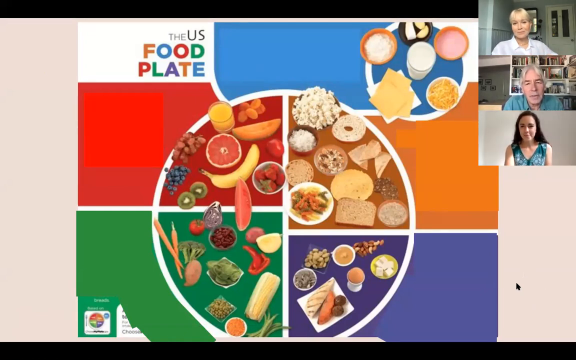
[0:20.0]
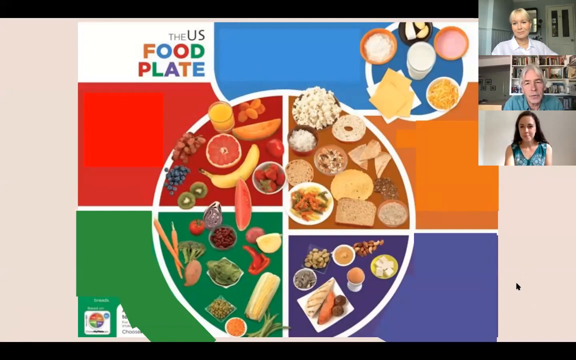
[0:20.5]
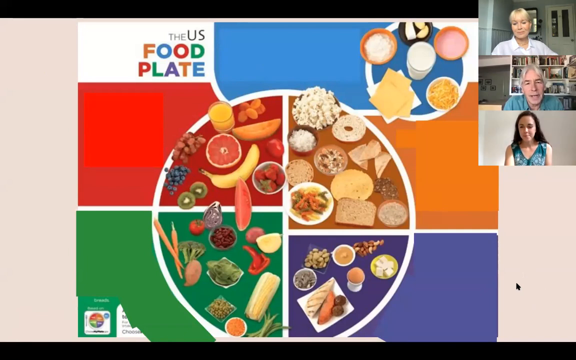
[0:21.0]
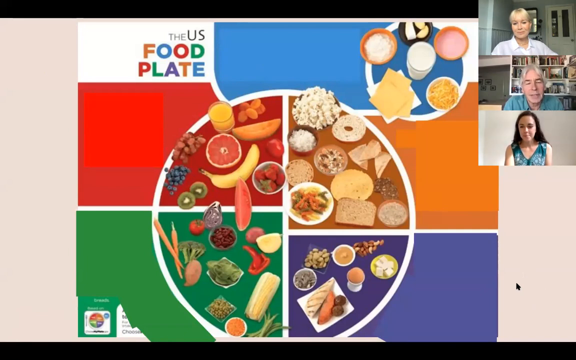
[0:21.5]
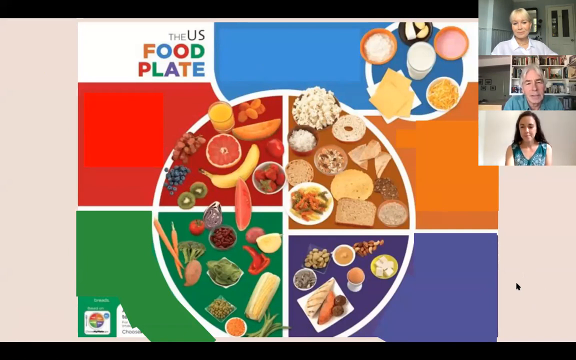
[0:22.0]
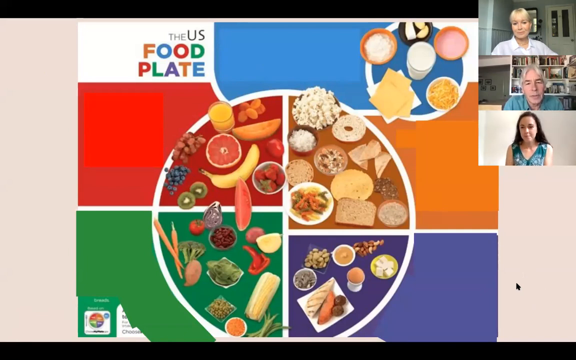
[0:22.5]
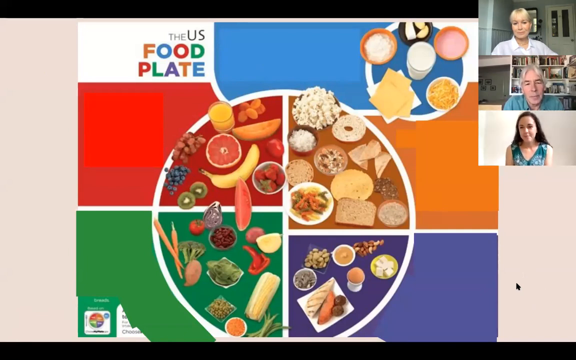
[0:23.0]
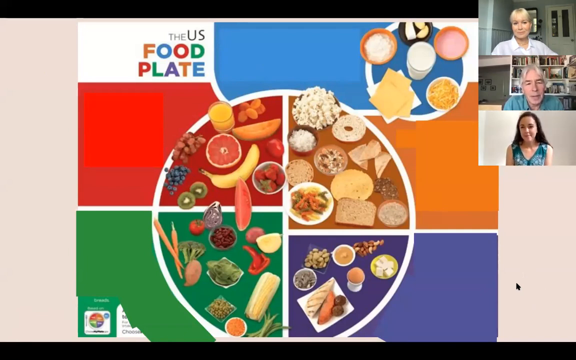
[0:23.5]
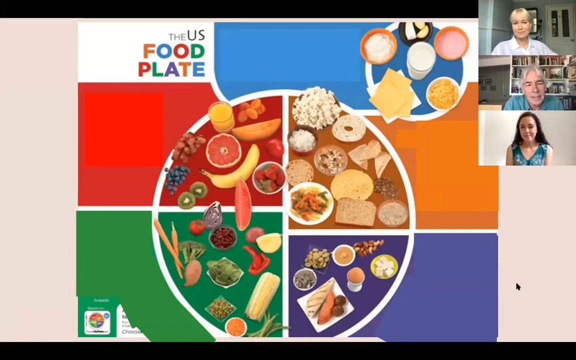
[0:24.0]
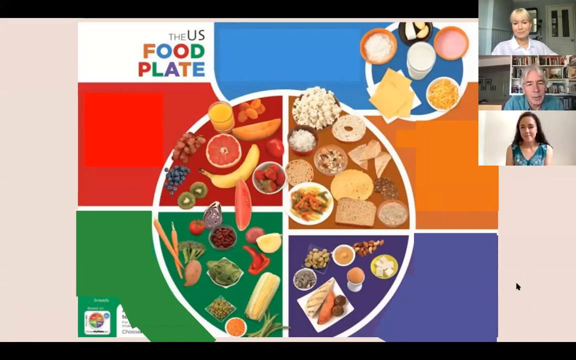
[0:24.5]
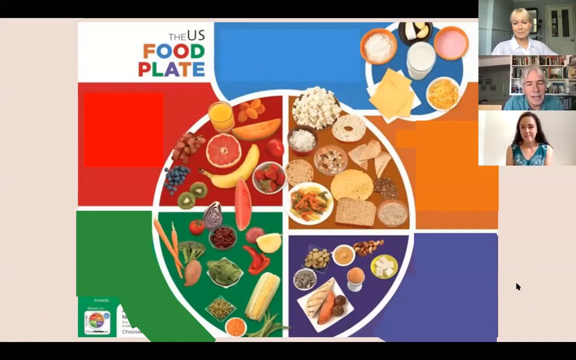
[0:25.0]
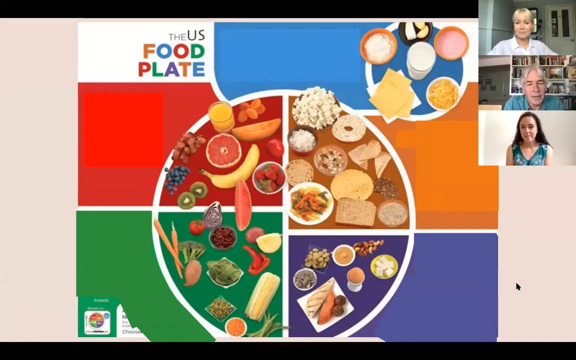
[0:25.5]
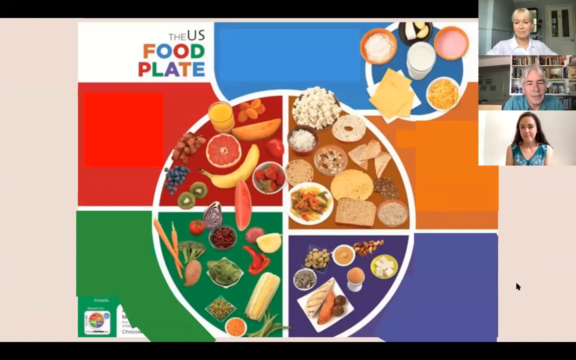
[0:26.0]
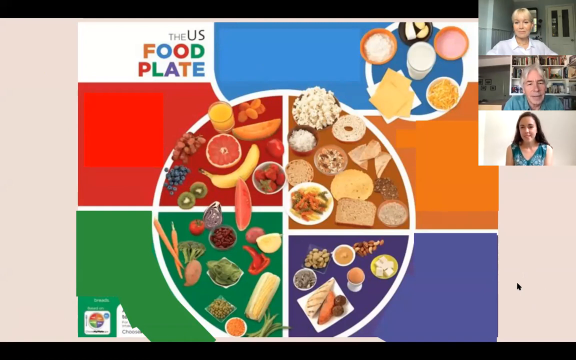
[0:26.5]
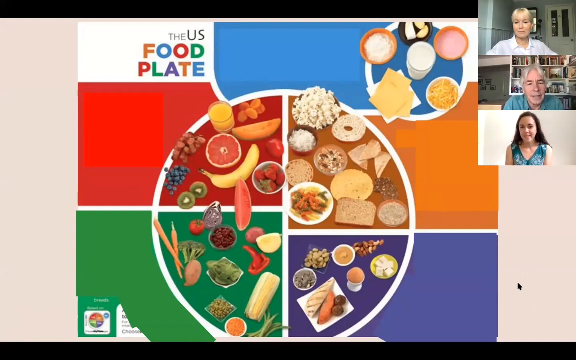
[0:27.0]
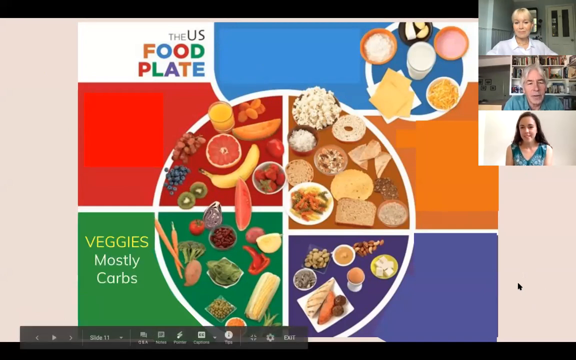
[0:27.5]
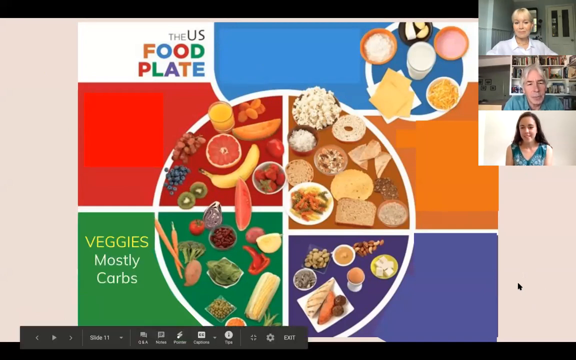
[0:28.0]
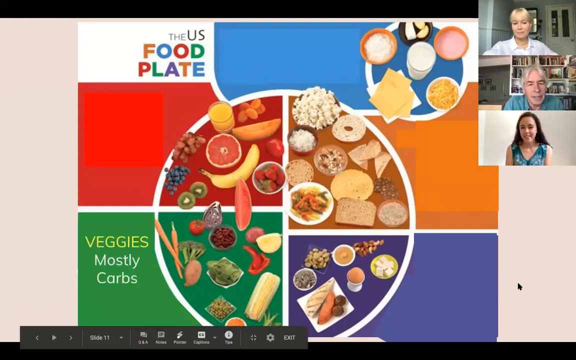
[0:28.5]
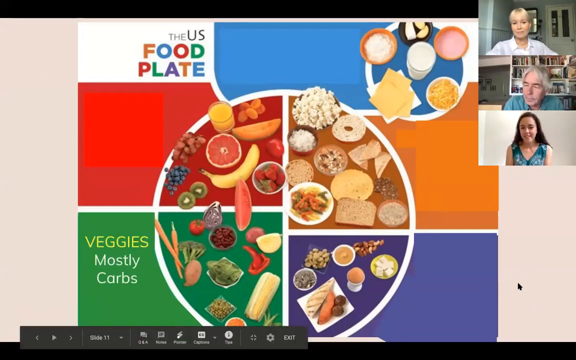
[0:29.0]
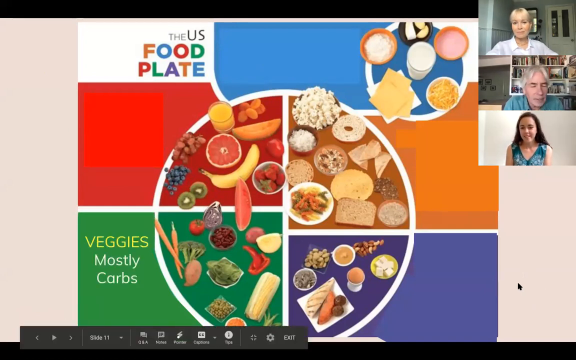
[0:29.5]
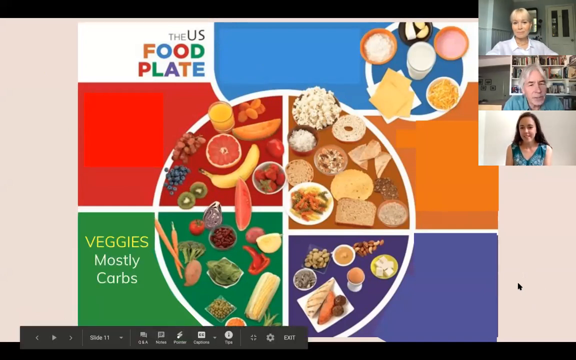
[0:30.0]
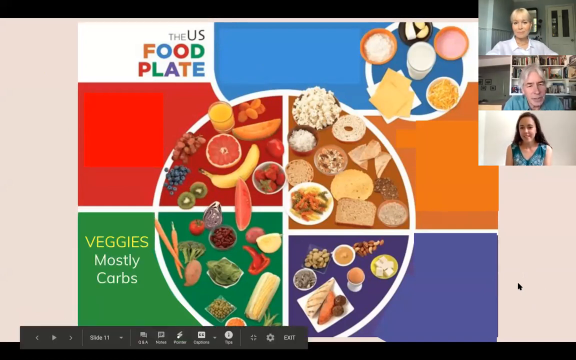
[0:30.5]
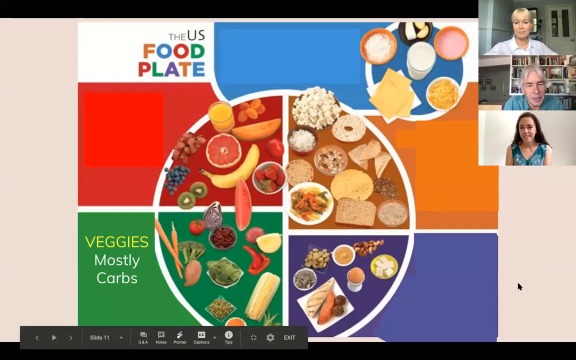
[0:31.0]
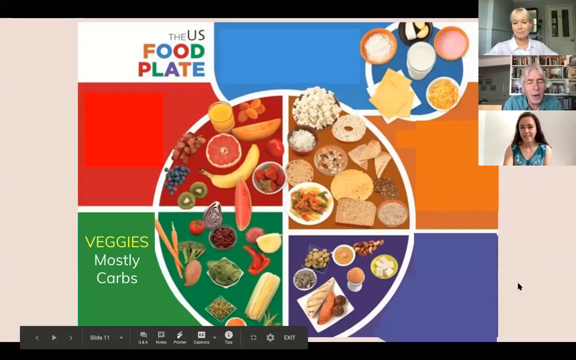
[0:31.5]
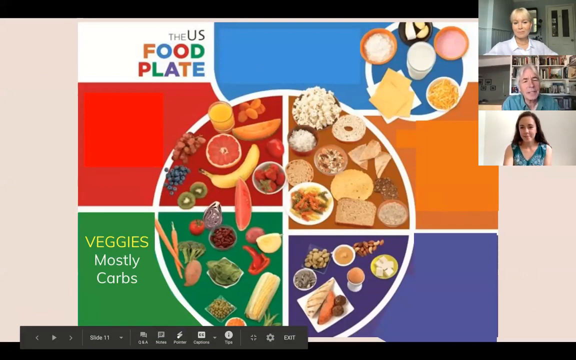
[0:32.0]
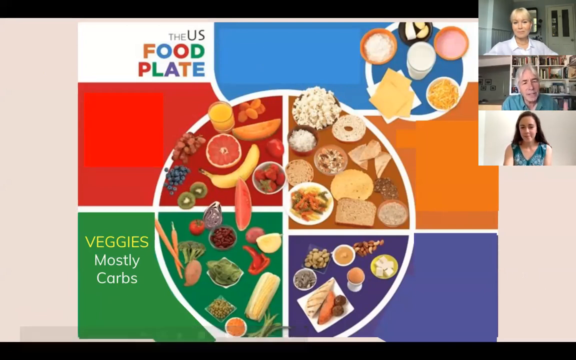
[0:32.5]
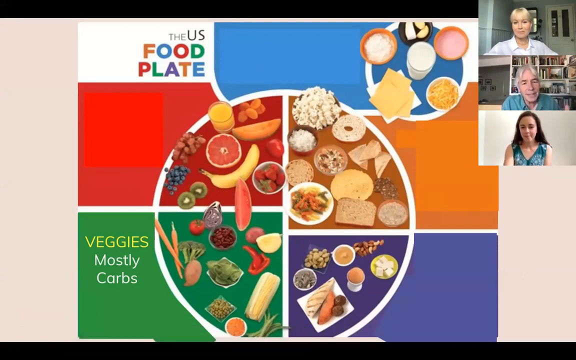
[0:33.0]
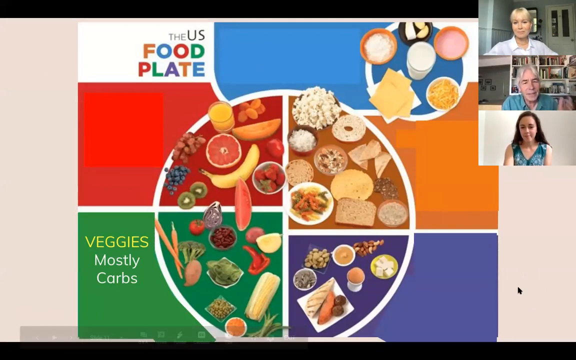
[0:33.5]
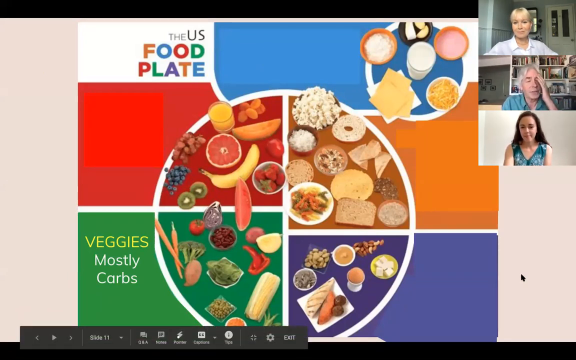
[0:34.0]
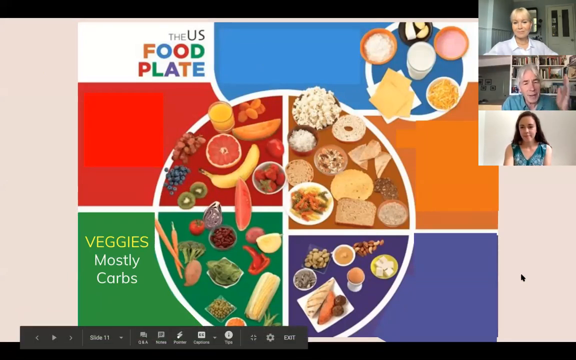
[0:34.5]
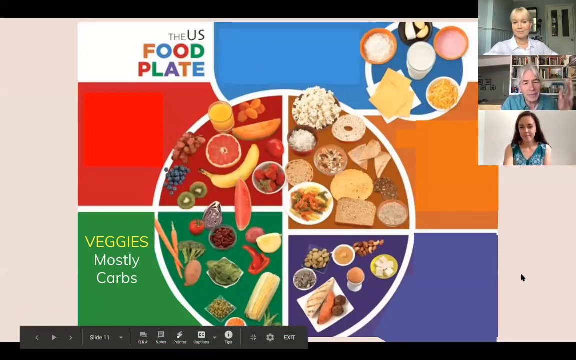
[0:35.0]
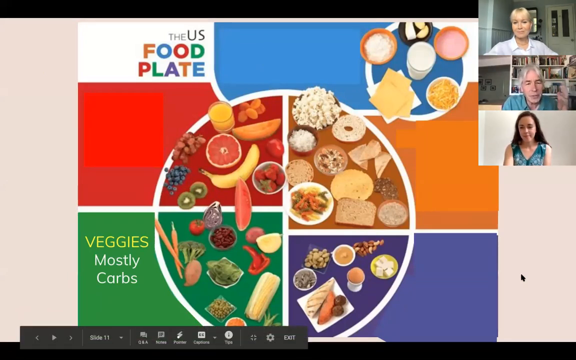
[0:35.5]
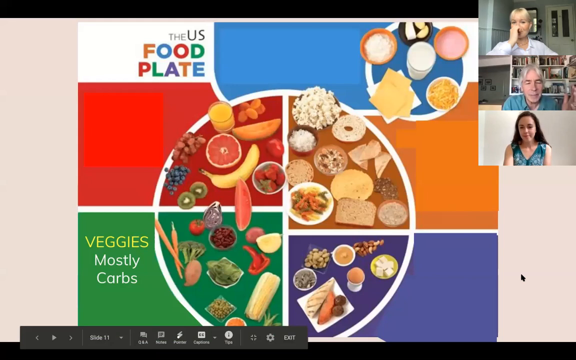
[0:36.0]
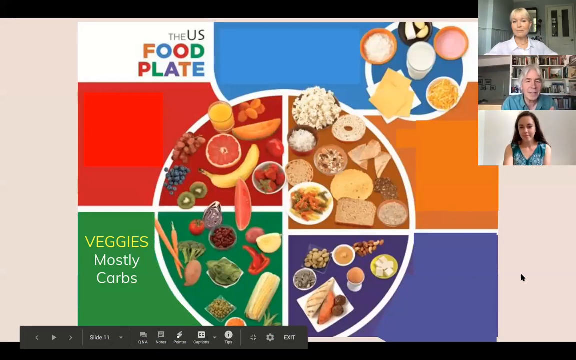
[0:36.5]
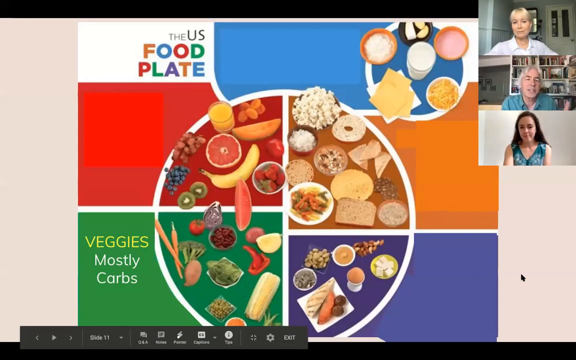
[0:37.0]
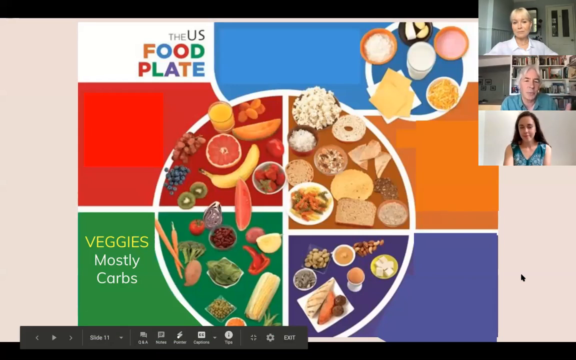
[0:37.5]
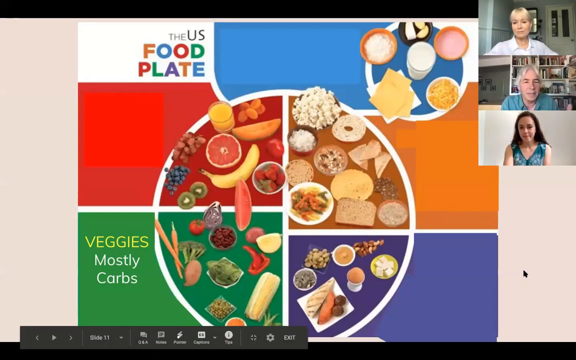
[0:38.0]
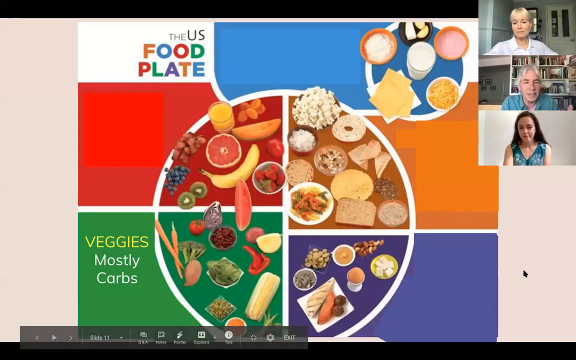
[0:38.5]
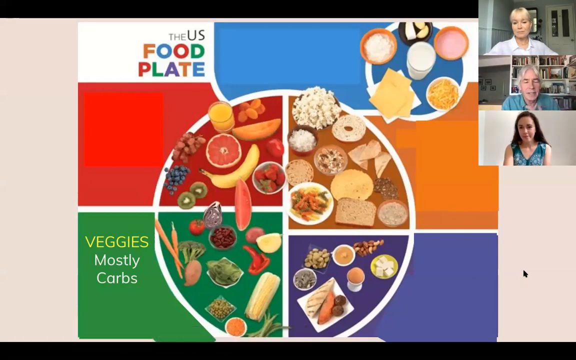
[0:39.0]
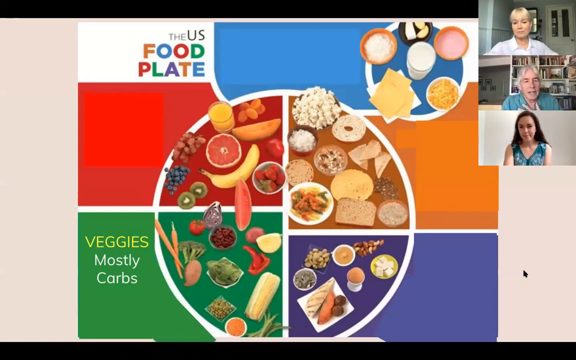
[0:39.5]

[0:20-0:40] In the top right corner of the screen are three video windows showing three different people. The top person is a female with blonde hair and a white shirt. The middle person is a male with gray hair and a green shirt. The bottom person is a female with brown, dark brown, or black hair wearing a sleeveless green and white shirt. All three are Caucasian. On the left side of the screen in the center, left of the people, is a chart that says "the U.S. food plate." There is a circle in the center bottom of the screen and a circle at the top right of the chart, both containing lots of different foods: mostly a banana, orange juice, grapes, corn, bread, and all kinds of other foods, including meats such as fish and chicken. The circle is divided into four segments: green, red, orange or brown, and purple. The male in the top right corner is speaking, and the dark-haired woman below him is nodding her head.